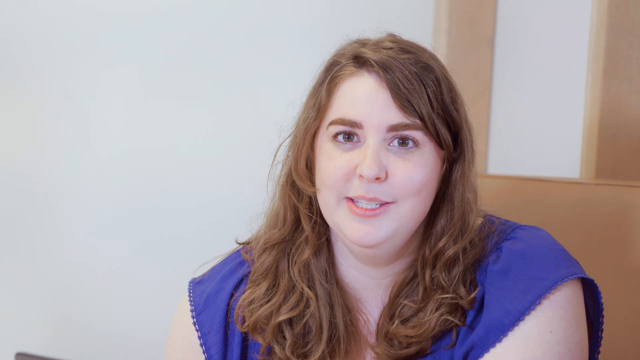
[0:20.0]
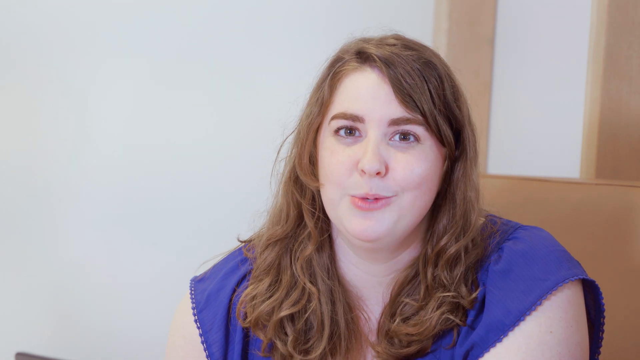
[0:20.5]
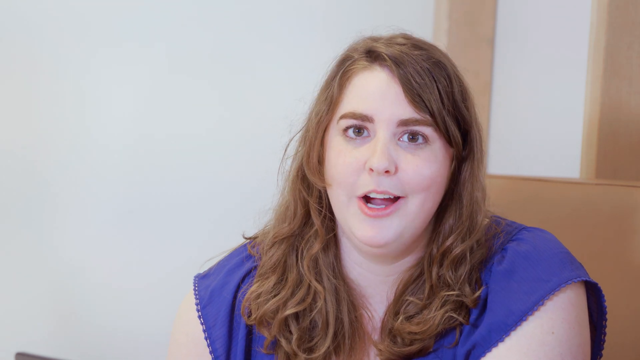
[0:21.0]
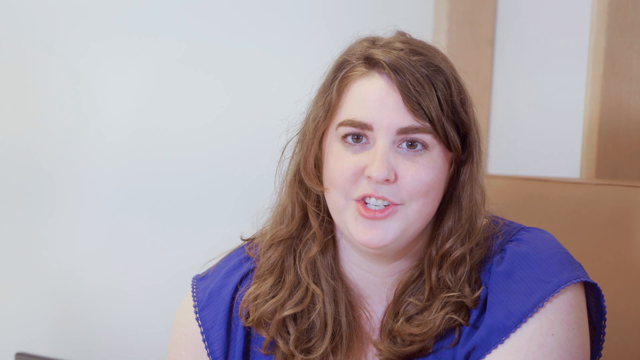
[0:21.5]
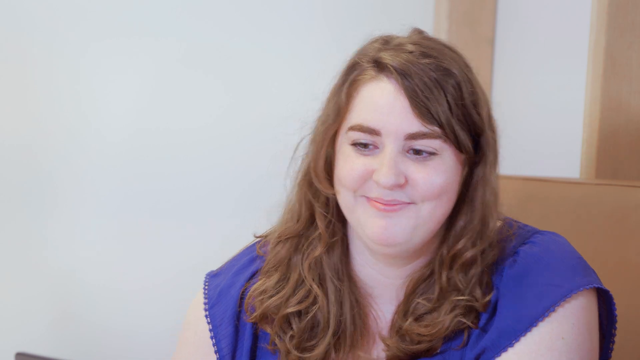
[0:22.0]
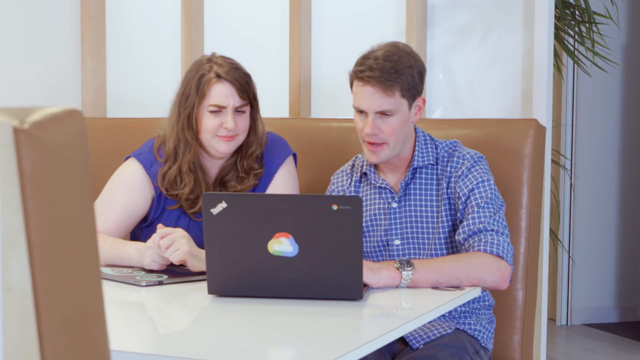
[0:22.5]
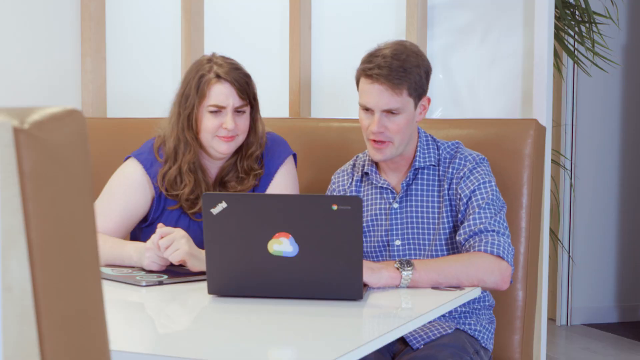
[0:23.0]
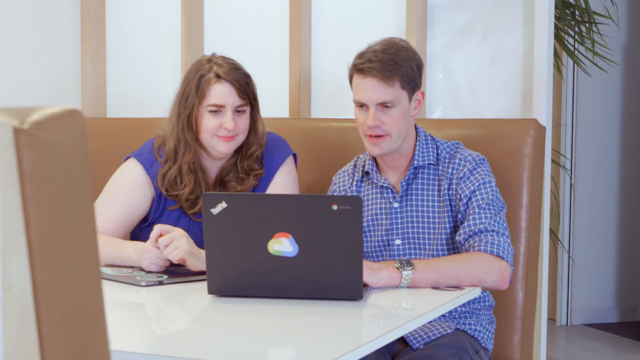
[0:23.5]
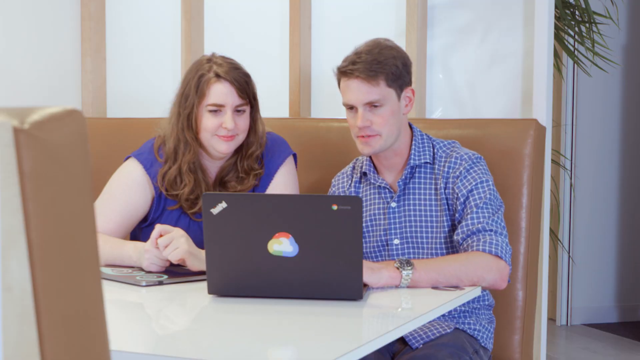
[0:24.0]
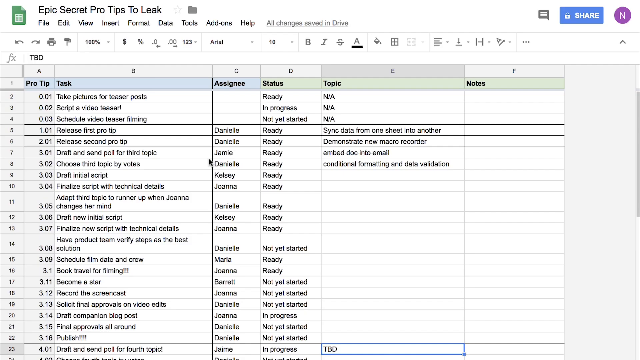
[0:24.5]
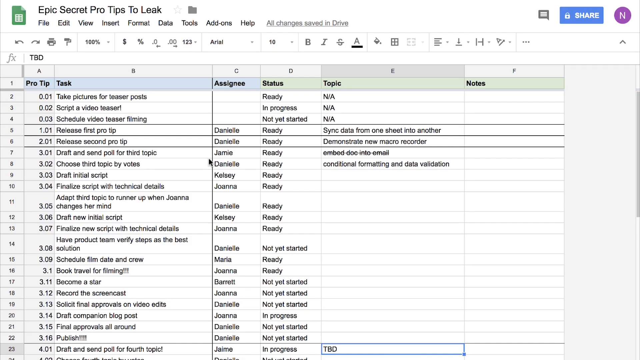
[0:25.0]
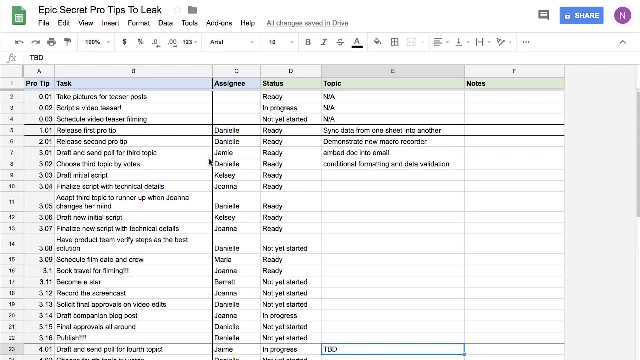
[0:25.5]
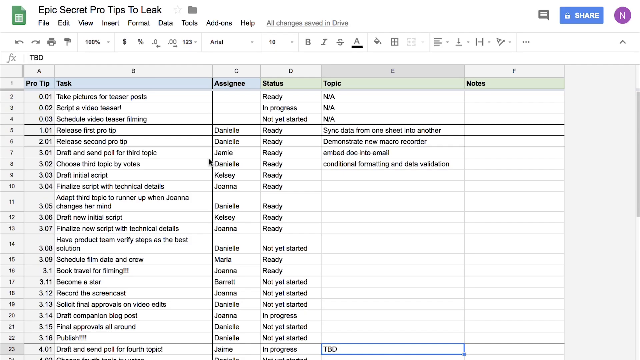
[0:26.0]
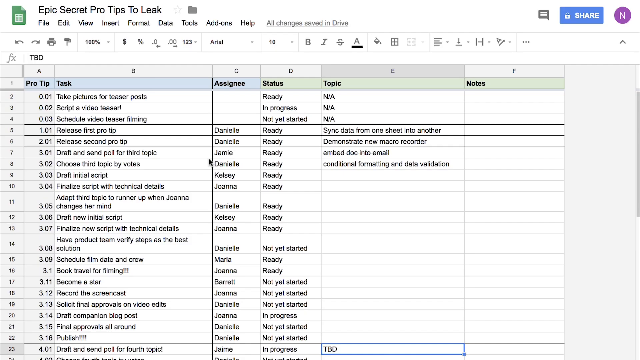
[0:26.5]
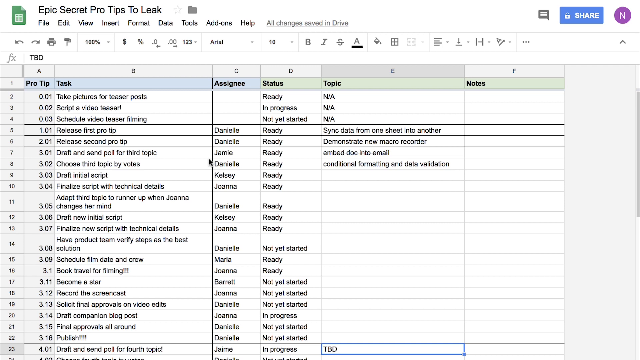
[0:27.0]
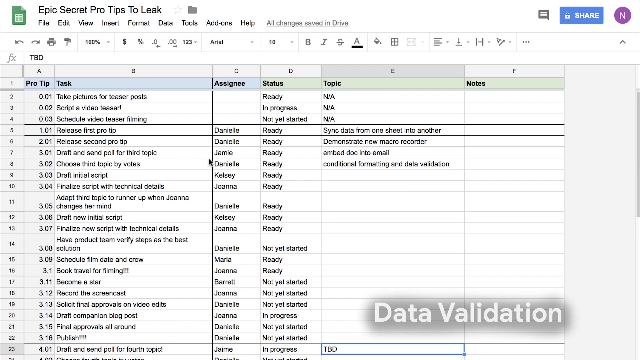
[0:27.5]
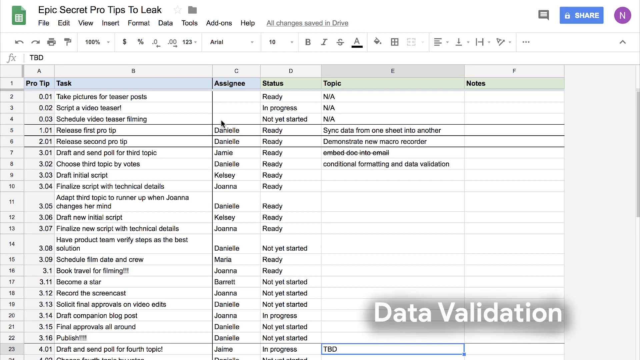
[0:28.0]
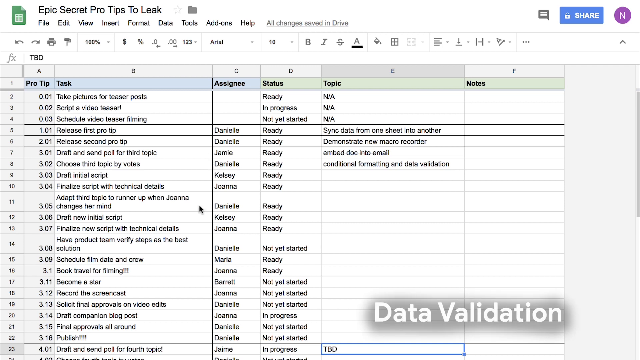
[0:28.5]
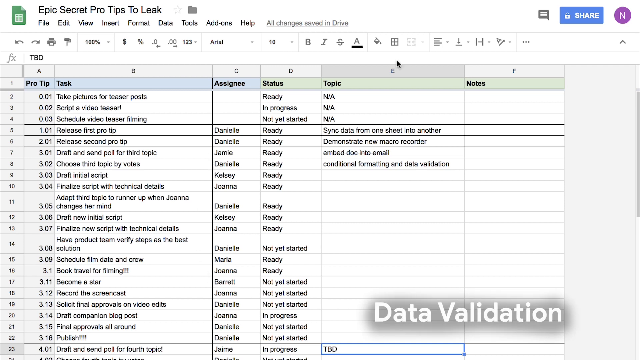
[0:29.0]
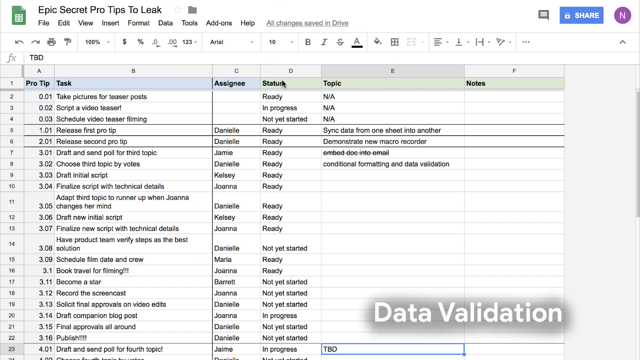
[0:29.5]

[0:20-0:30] Joanna Smith is on screen, smiling and seemingly trying to show something. Sitting there is her colleague, who wears a white and blue checked shirt. They show a document or sheet on the laptop screen. On the Google sheet are the words "EPIC's secret projects" and data validation, with a list of names of people who can be assigned to a certain task. There is also a status showing whether each item is ready, in progress, not yet started, or not applicable, and a topic option. At the far end of the Google sheet there is a share button, and there are also notes.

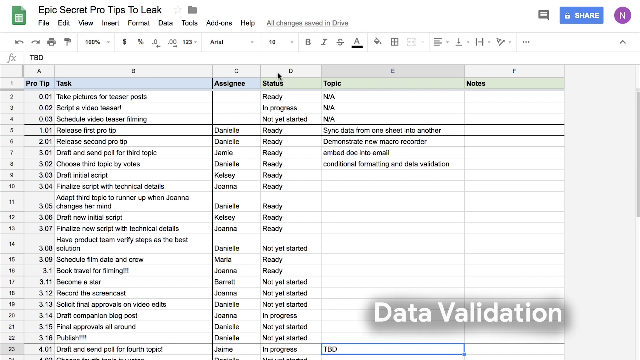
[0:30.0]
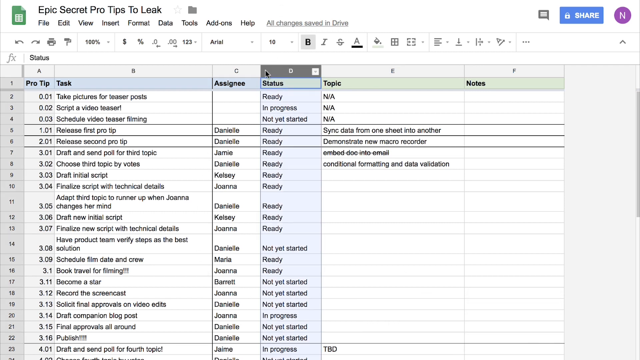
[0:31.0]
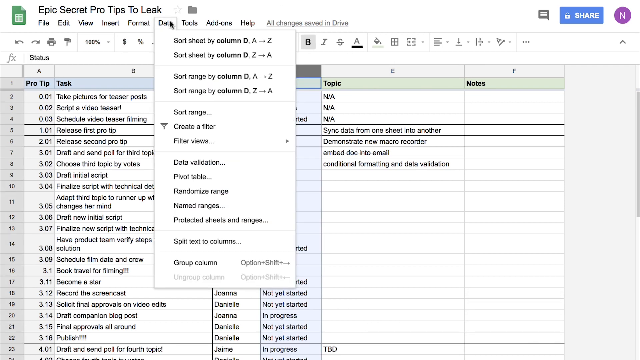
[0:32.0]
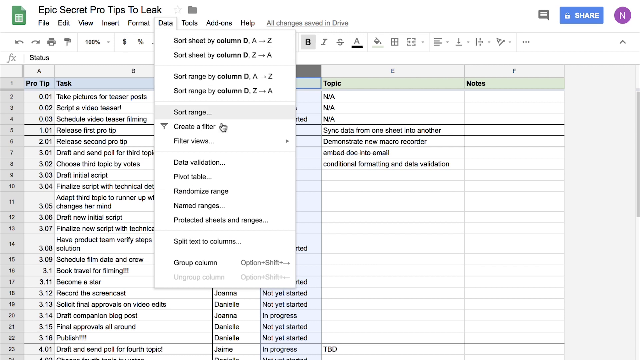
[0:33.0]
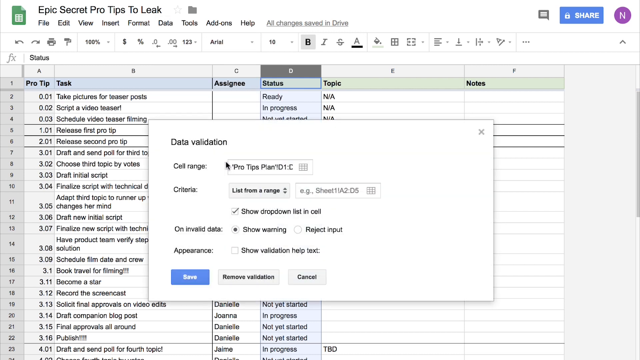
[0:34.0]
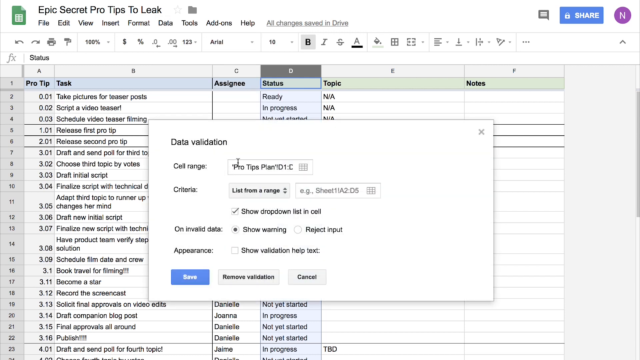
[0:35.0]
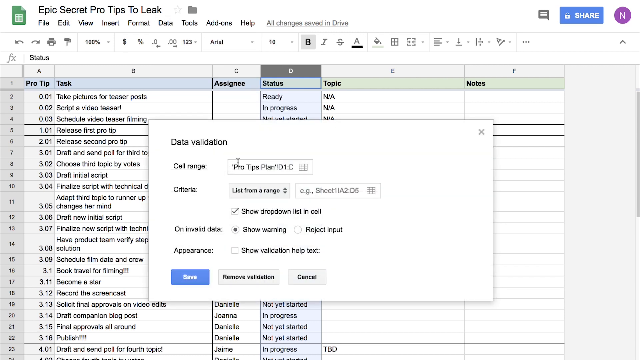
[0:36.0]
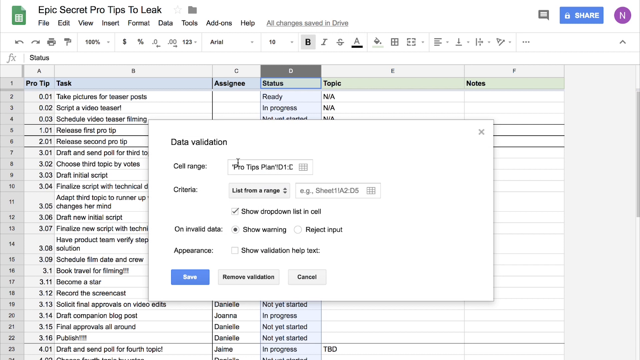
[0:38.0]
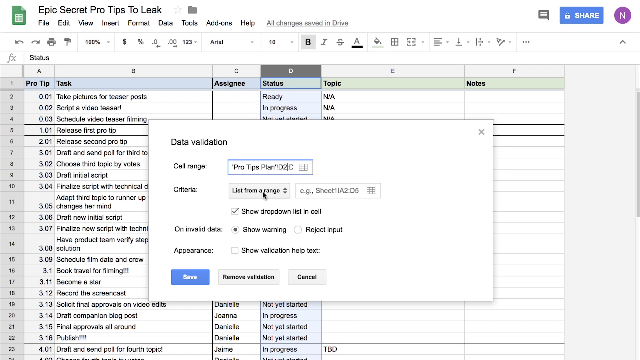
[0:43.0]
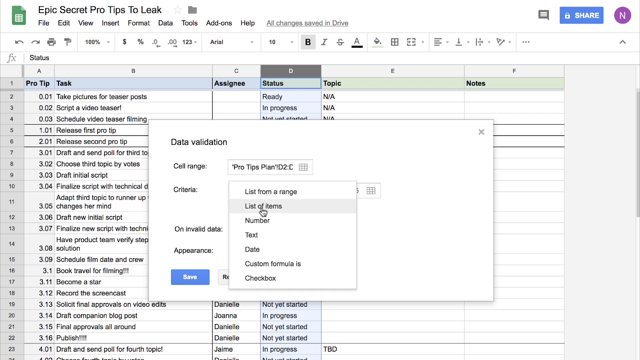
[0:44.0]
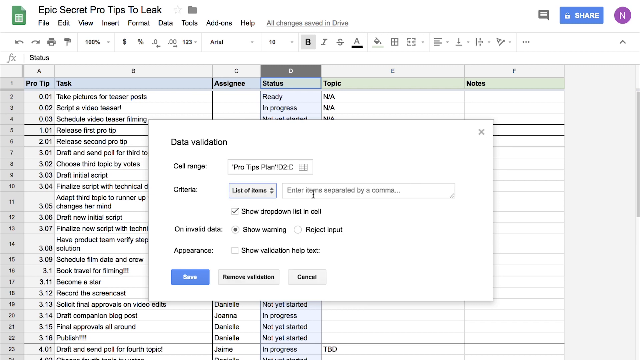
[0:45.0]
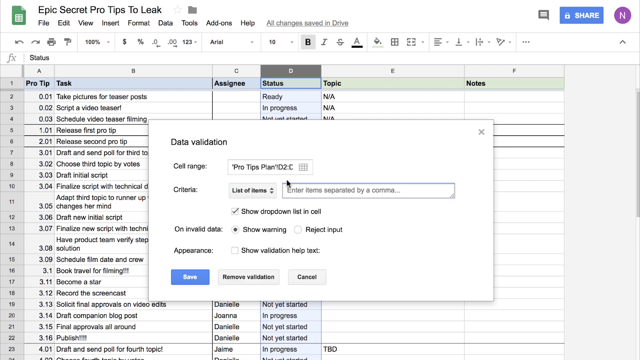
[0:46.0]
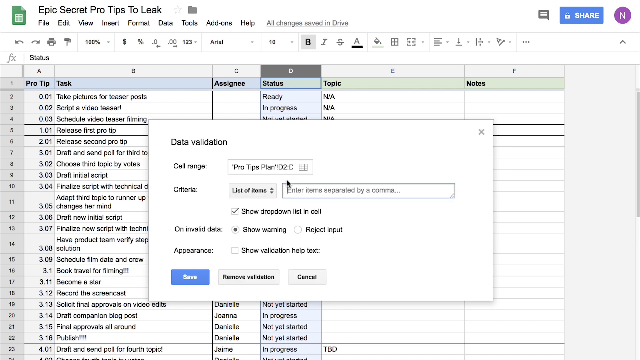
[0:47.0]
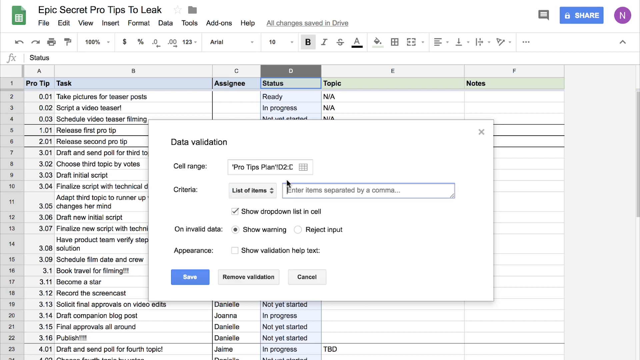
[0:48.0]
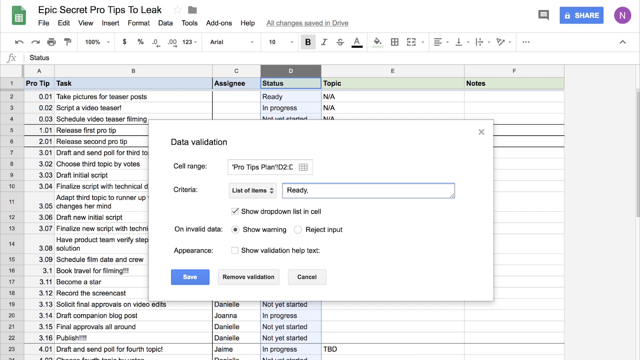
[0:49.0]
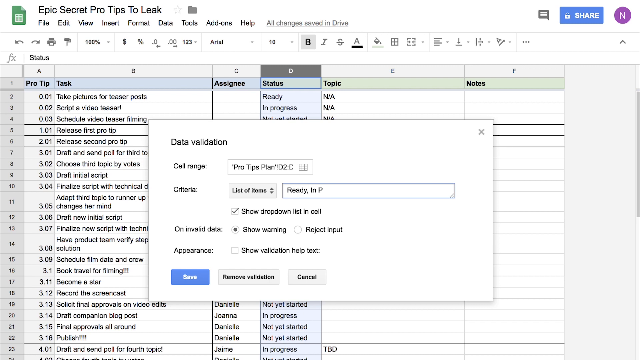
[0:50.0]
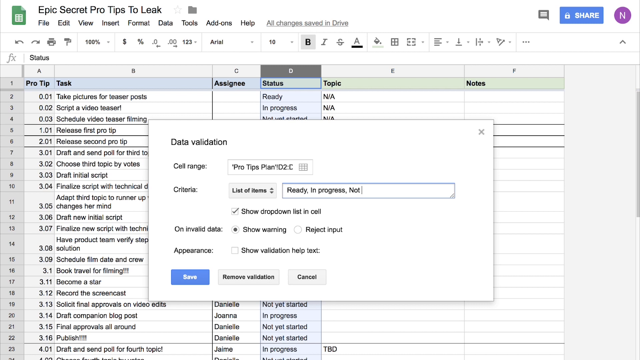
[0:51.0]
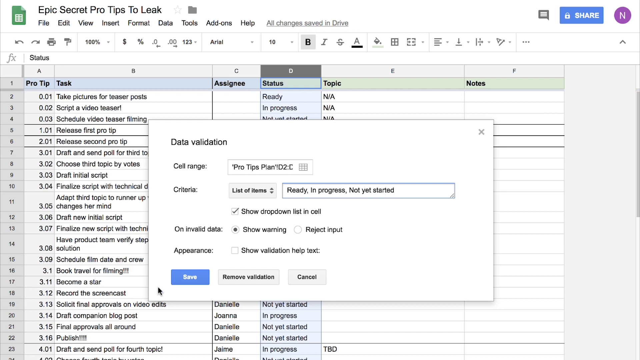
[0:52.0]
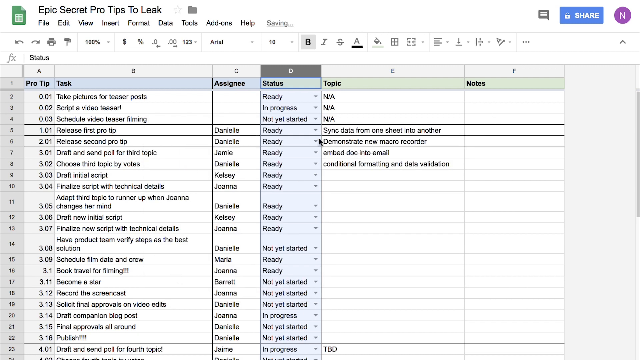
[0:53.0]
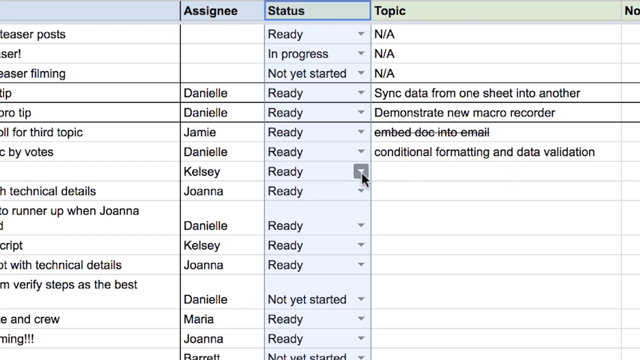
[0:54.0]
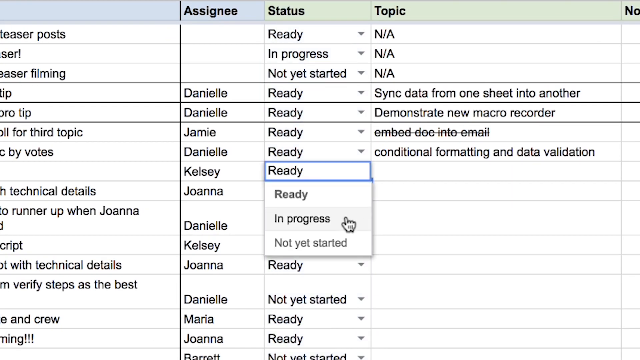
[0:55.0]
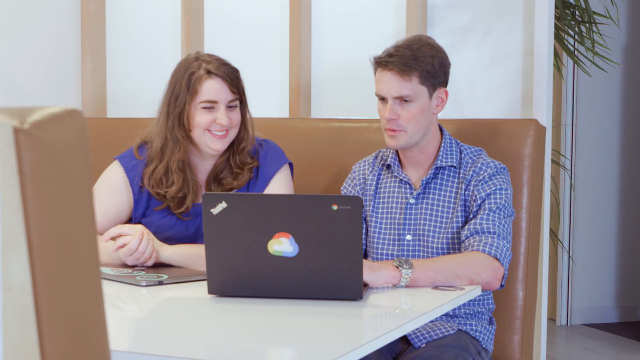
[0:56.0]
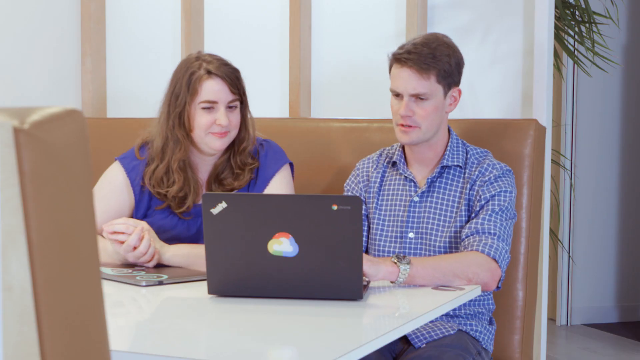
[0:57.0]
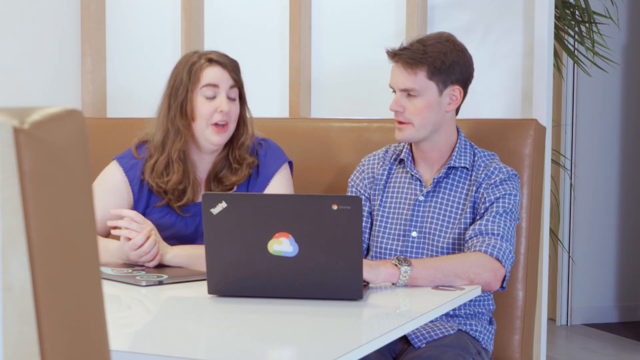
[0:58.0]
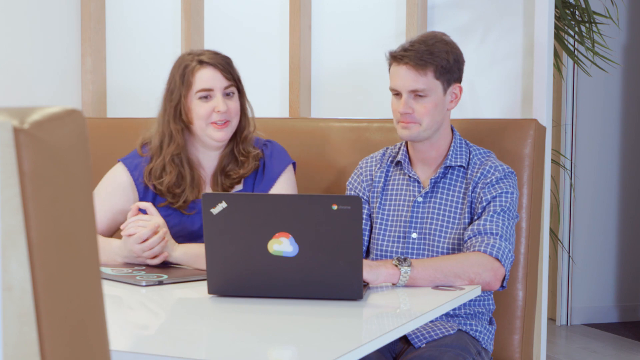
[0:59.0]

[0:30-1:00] Johanna Smith wears a blue top and has blonde hair. She lifts her hands as if trying to illustrate or show something, and then he looks back to the laptop. Behind Johanna there is a white background, and next to her a gentleman in a checked shirt is sitting. They are showing or working on a document on a computer, about the epic secret pro tips. At its far end there is a share button. A lot of pro tips tasks are listed, along with data validation, which has a save option. He shows the list of names and the list of everything that needs to be done; some items are ready and some are in progress.